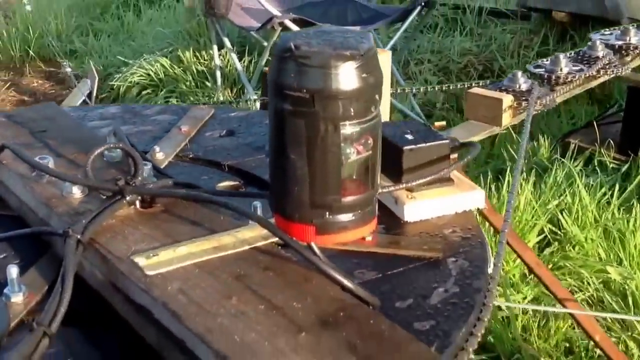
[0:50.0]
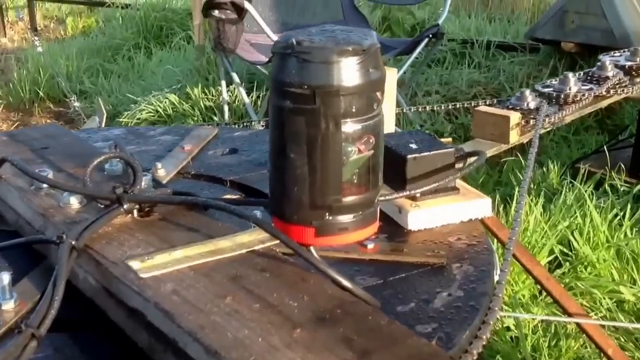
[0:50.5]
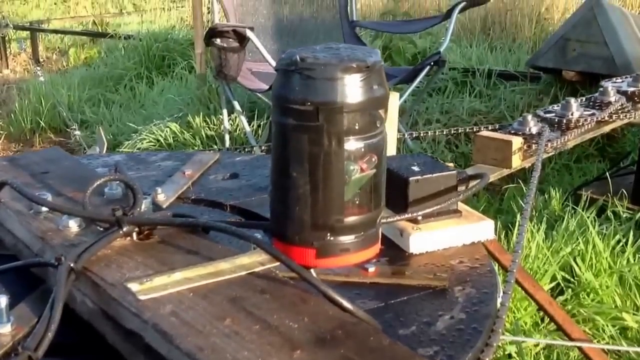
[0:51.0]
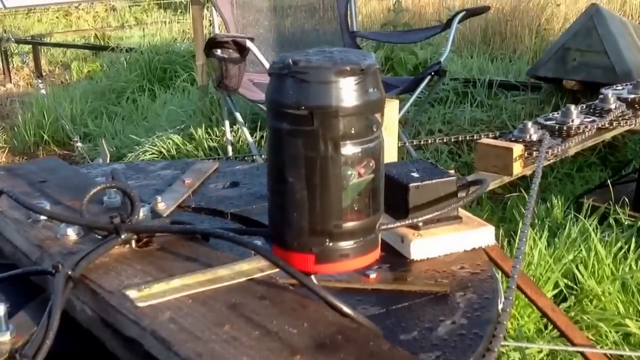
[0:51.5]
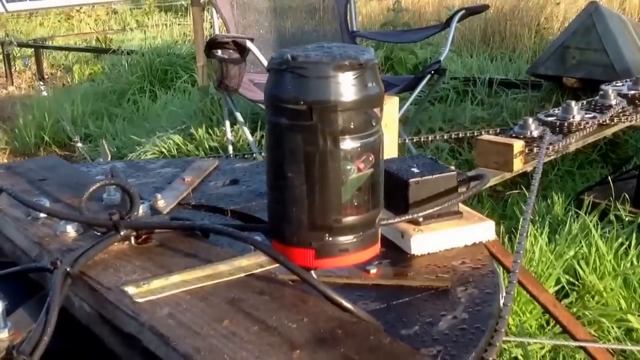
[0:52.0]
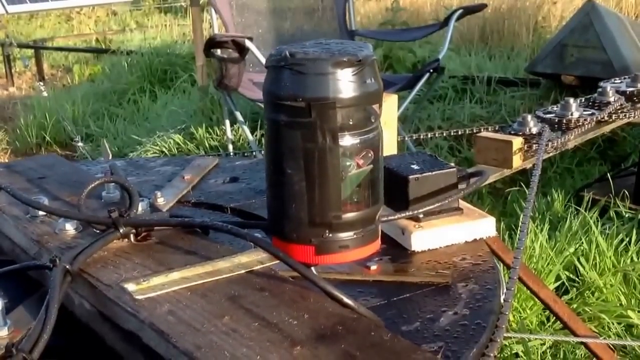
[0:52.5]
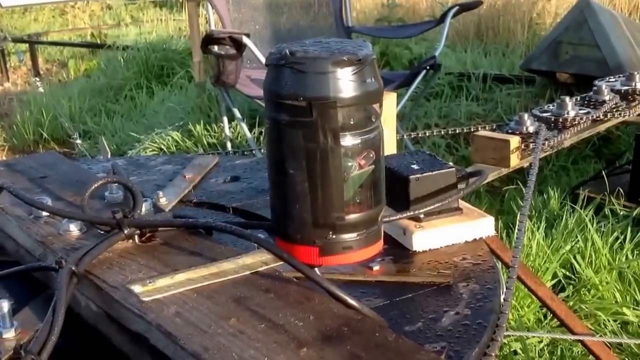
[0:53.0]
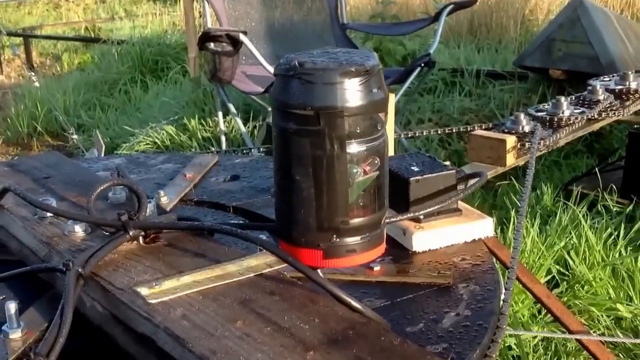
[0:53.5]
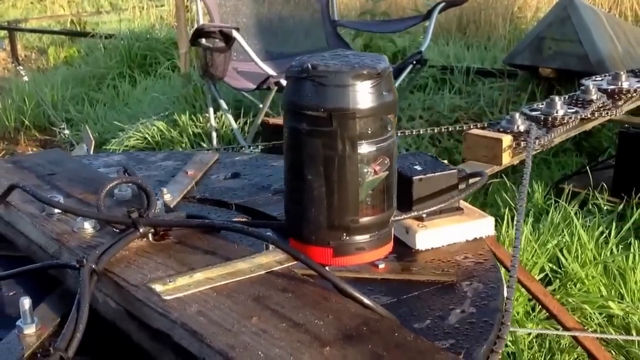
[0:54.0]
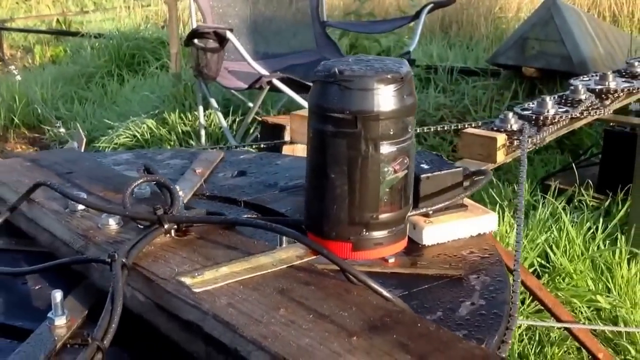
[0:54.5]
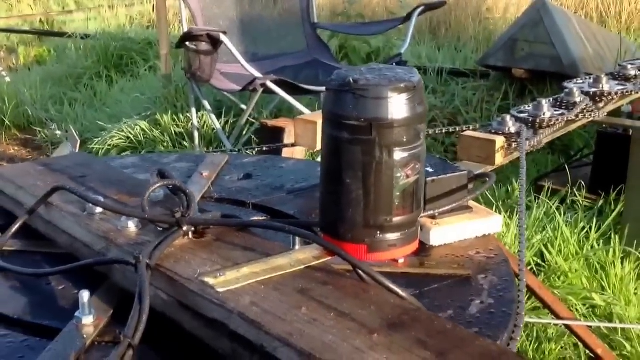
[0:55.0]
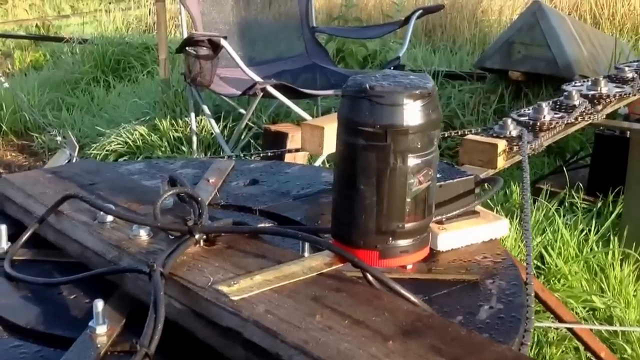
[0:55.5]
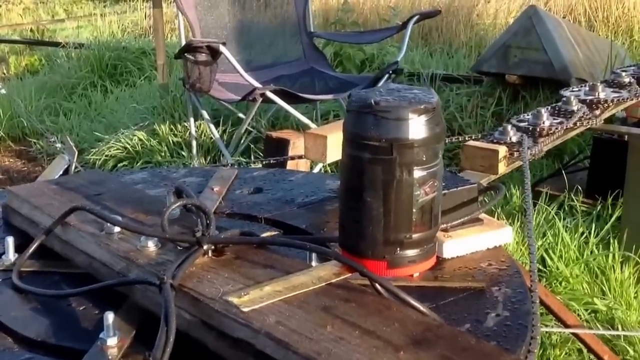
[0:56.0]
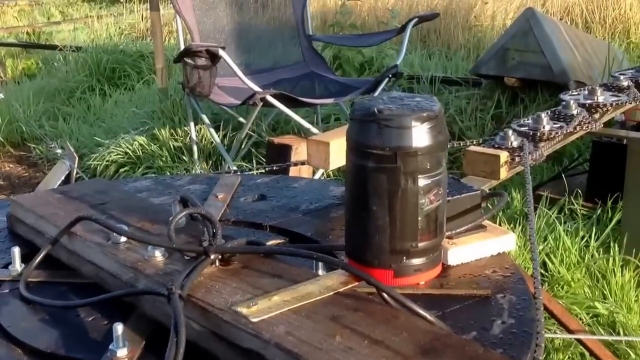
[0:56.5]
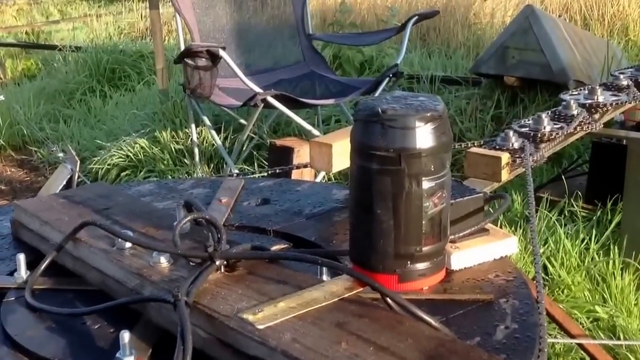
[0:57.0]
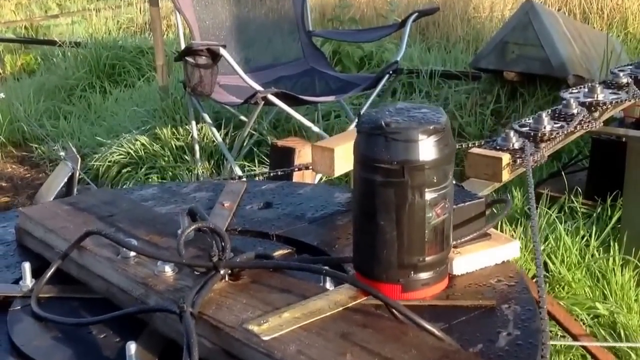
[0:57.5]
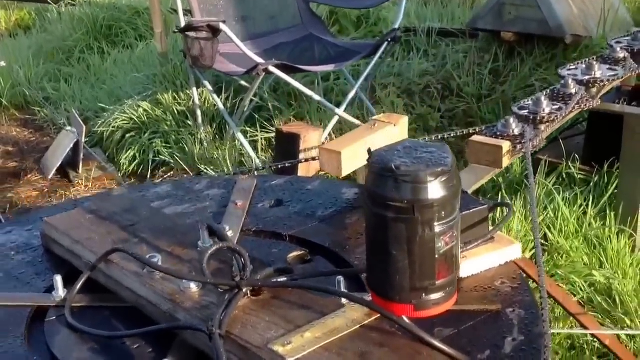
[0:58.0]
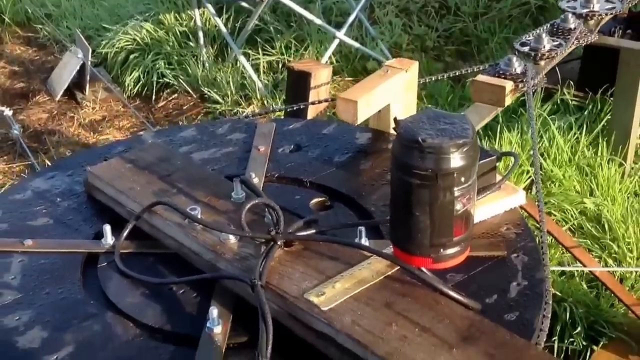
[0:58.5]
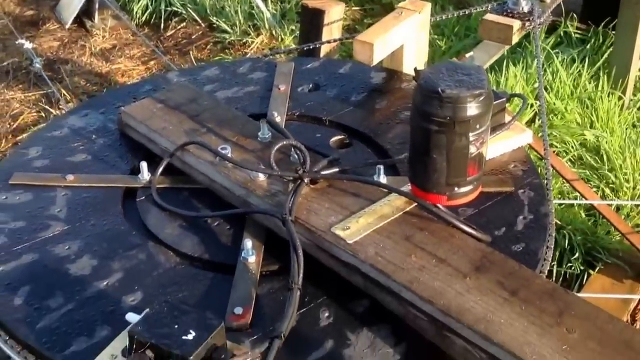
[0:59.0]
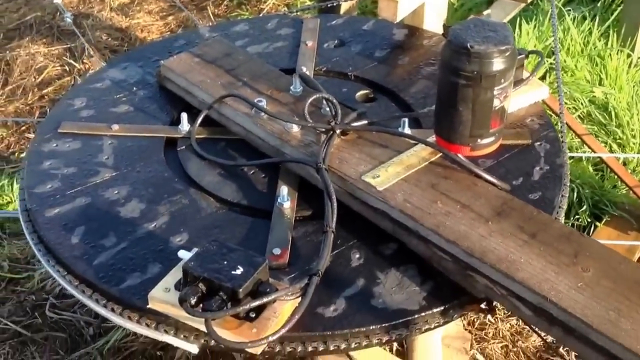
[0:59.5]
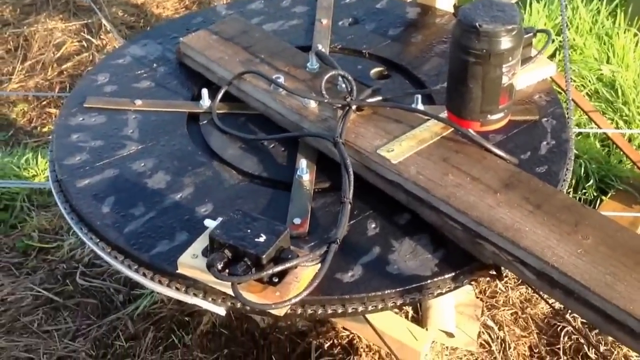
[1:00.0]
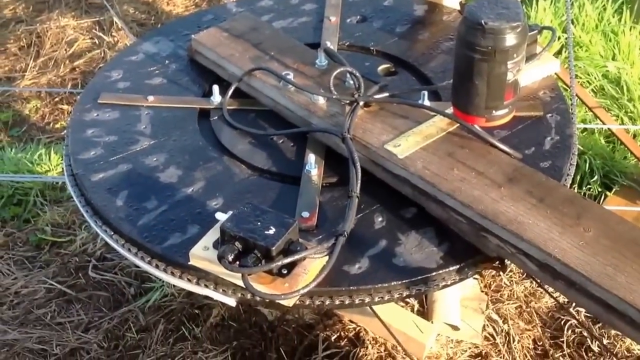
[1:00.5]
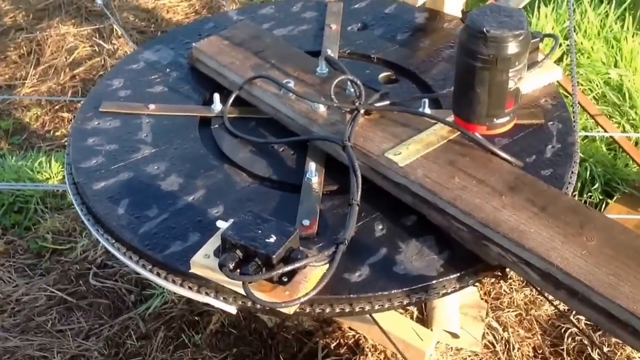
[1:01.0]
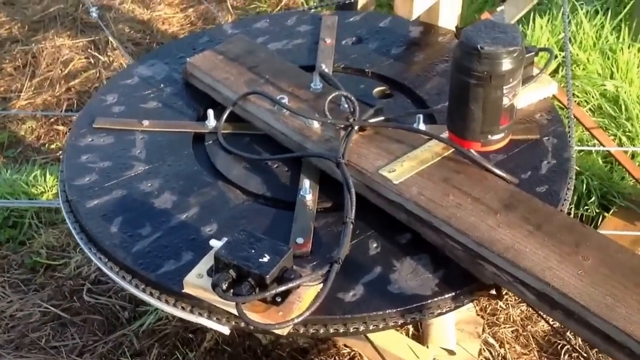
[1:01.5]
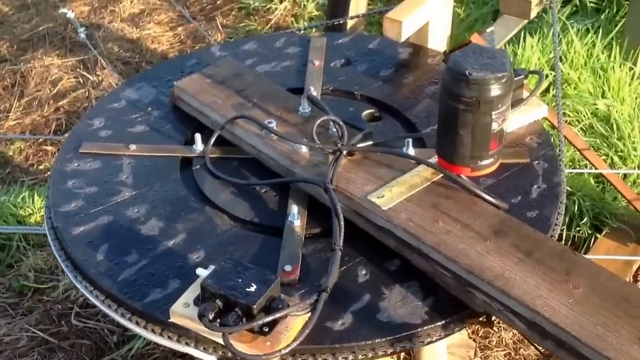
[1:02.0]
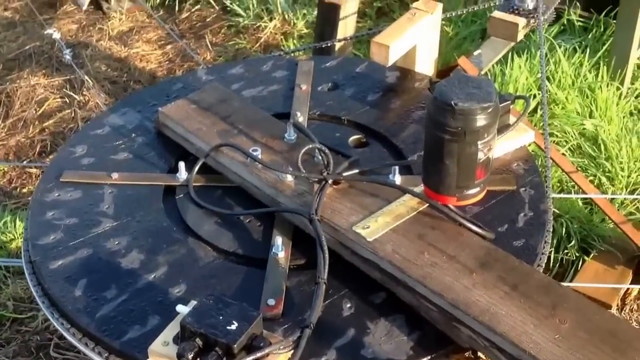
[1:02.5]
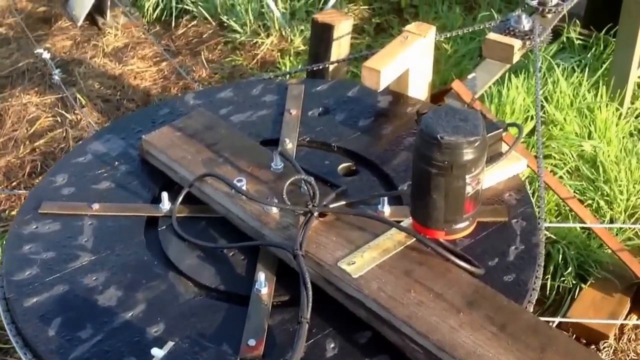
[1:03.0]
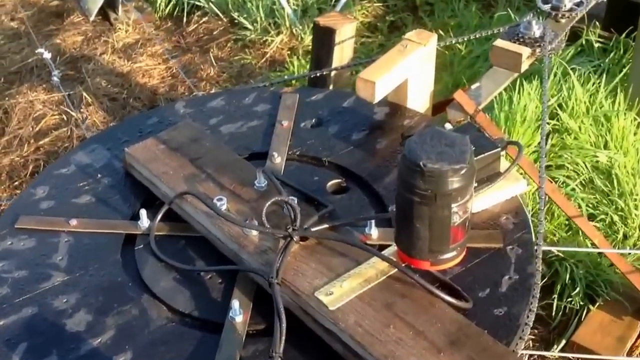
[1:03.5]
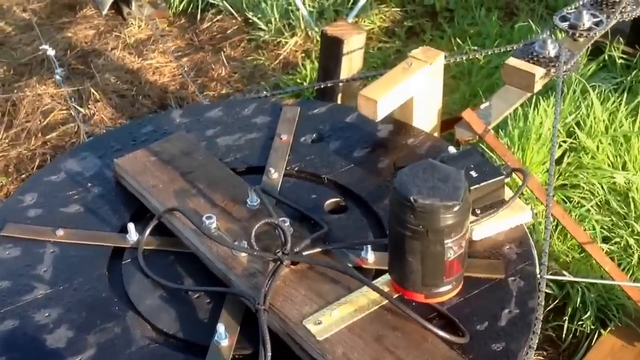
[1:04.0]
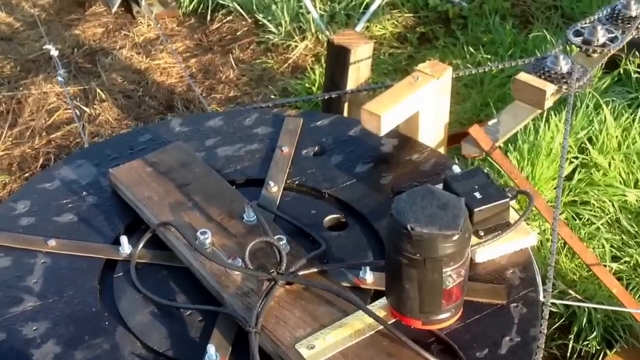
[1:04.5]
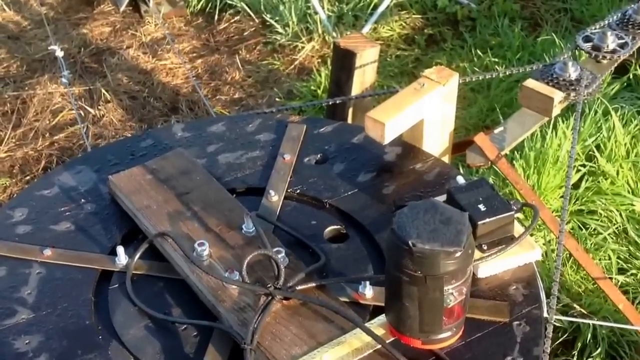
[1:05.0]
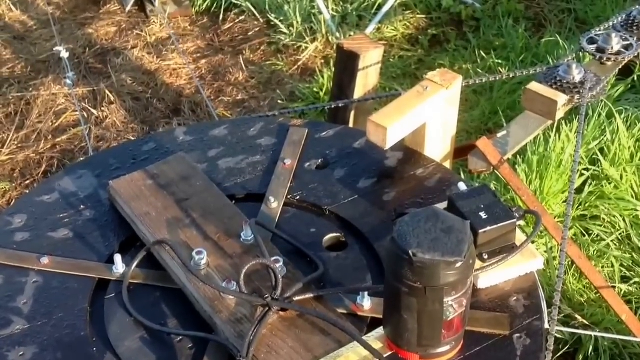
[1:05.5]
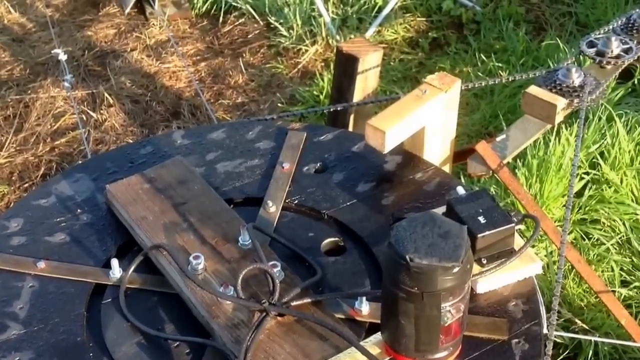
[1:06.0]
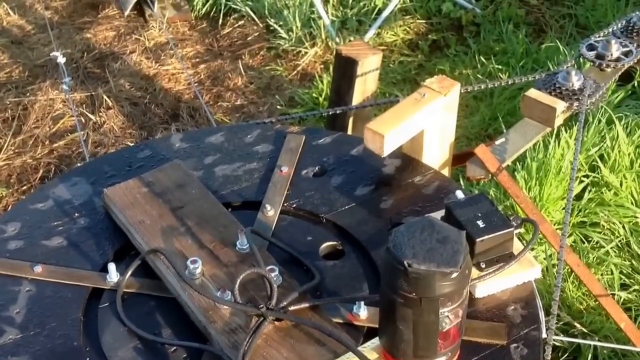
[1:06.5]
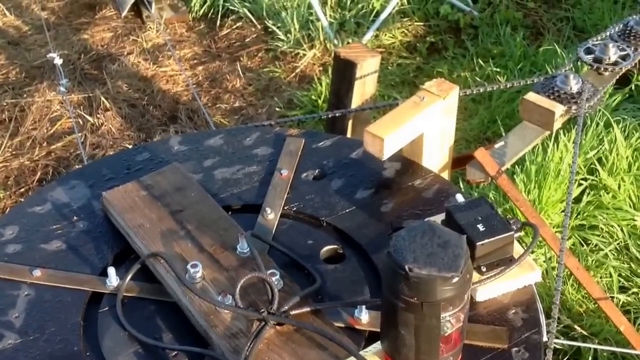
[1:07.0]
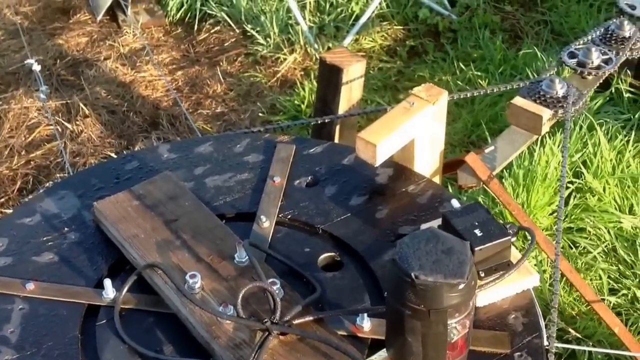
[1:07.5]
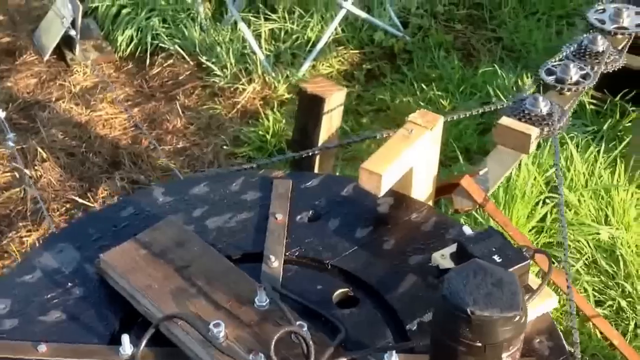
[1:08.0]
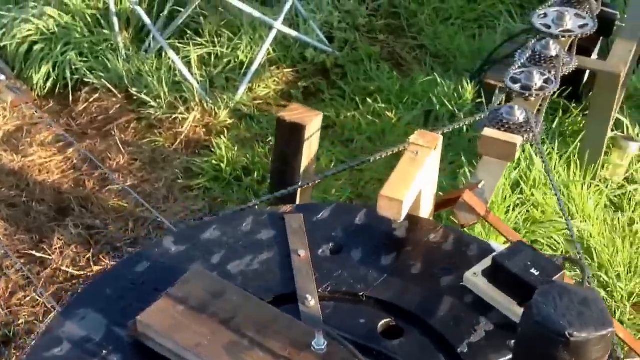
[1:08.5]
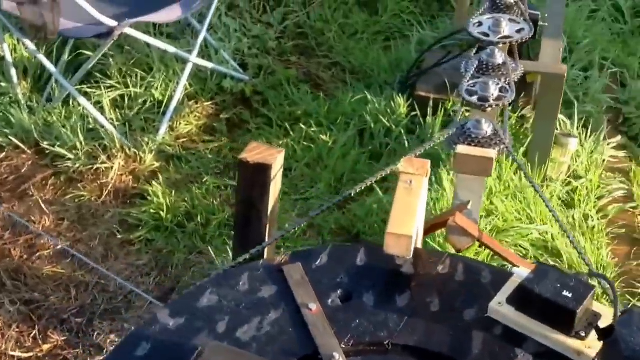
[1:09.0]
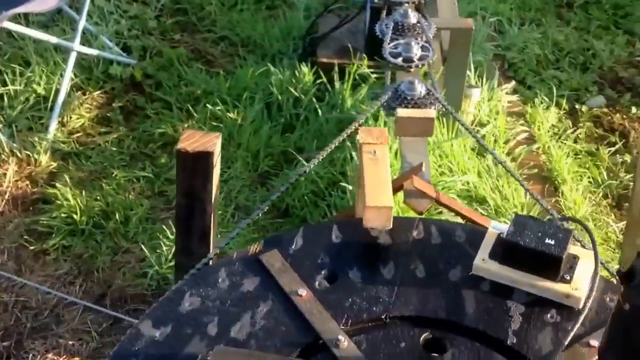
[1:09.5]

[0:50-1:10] The camera focuses closely on a cylindrical-looking component attached to the bigger disc, part of the solar panel setup. The component has a red base, a translucent dark brown body, and a shiny silvery grey top. It is on a disc, and a metal handle is attached to the disc, with what looks like a pulley chain going from the disc around a pulley on the handle and back to the disc. There are two other pulleys on the metal handle, making a total of about three to four pulleys on it. The equipment is set against a backdrop of green grass. The camera stays on the equipment, panning slightly to the left to show the other side of the disc, then slowly pans to the right and focuses more on the grass.